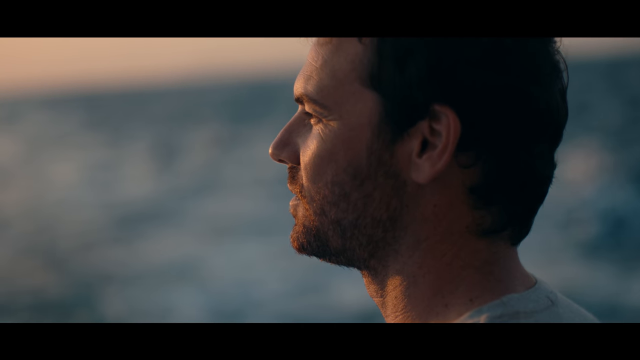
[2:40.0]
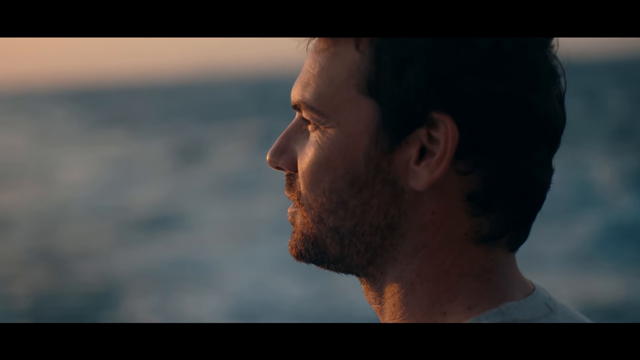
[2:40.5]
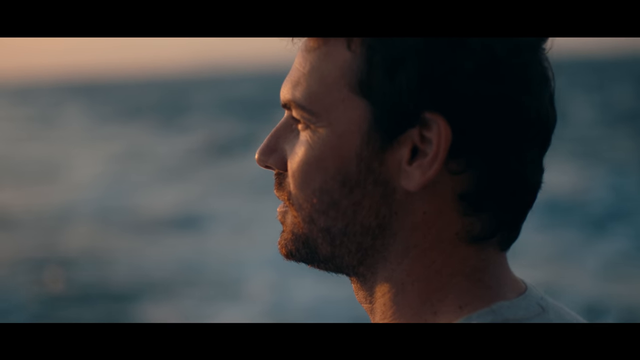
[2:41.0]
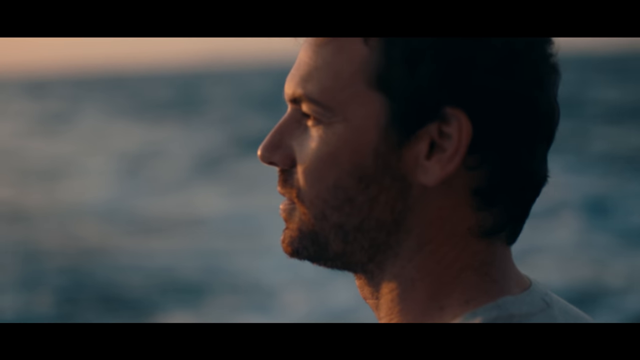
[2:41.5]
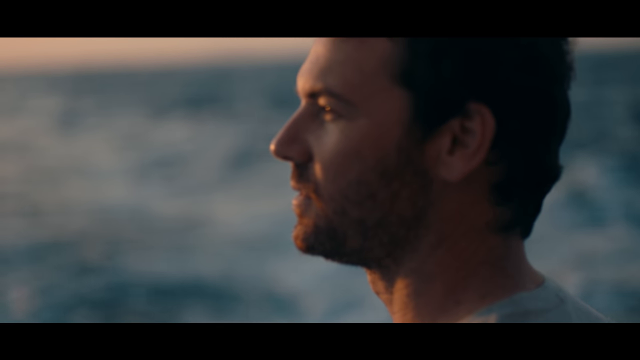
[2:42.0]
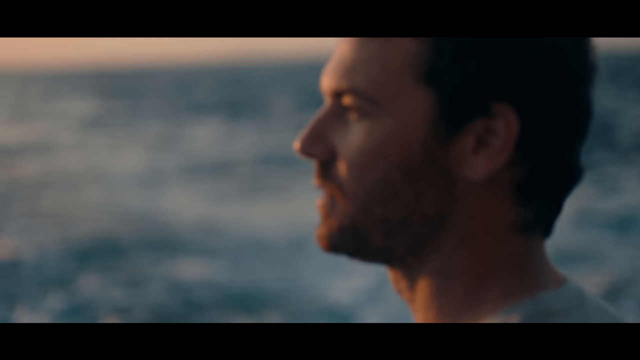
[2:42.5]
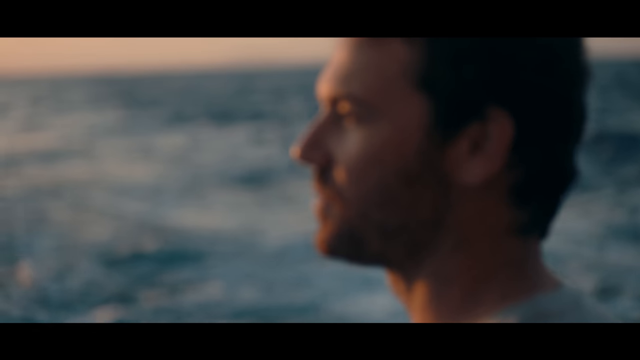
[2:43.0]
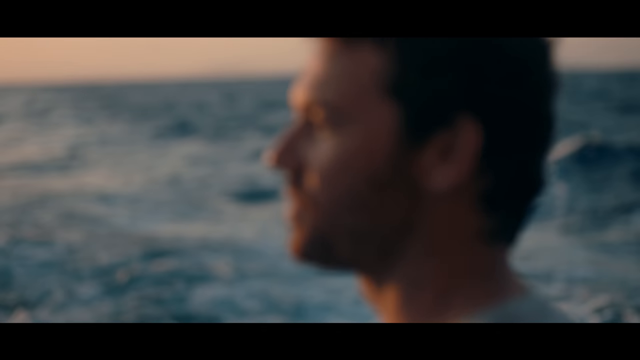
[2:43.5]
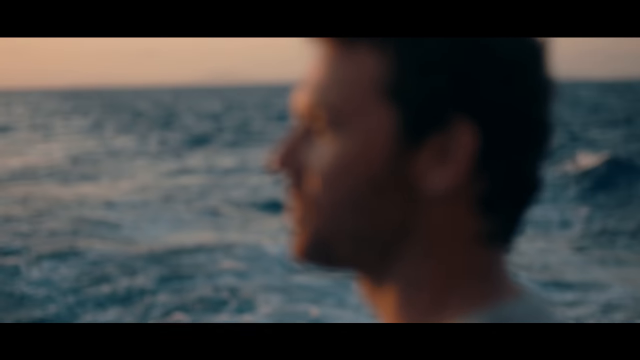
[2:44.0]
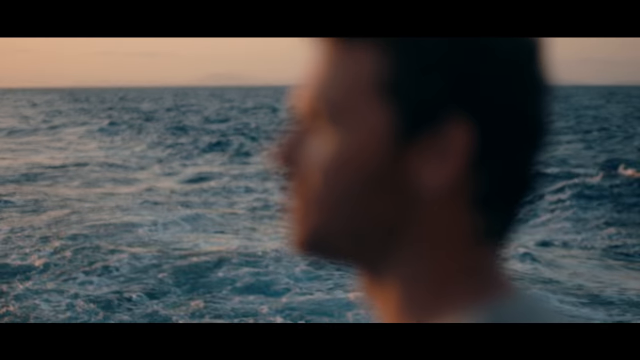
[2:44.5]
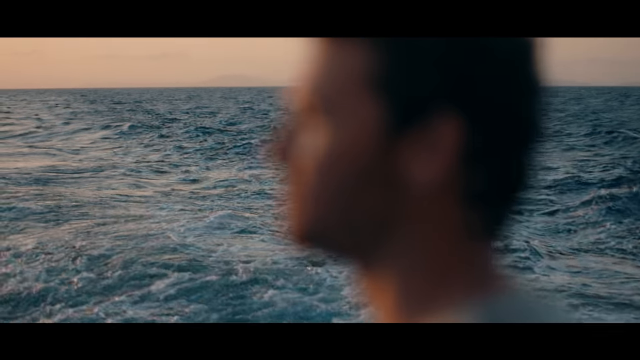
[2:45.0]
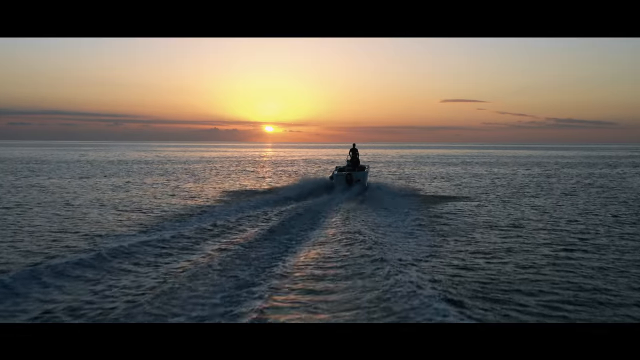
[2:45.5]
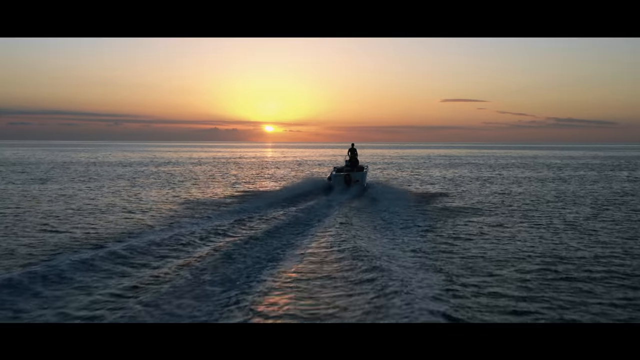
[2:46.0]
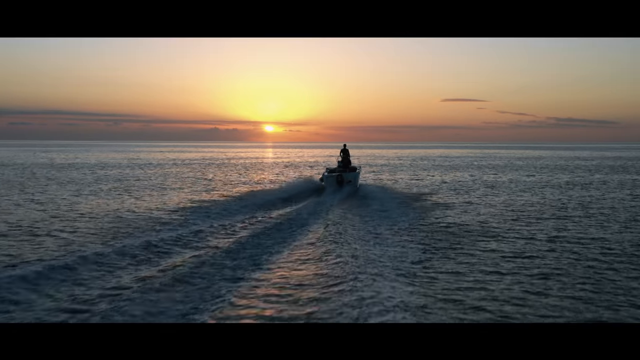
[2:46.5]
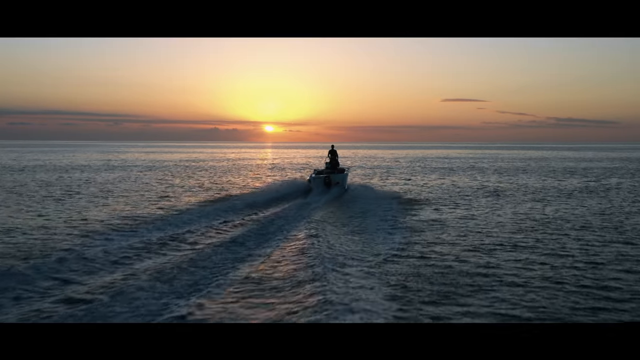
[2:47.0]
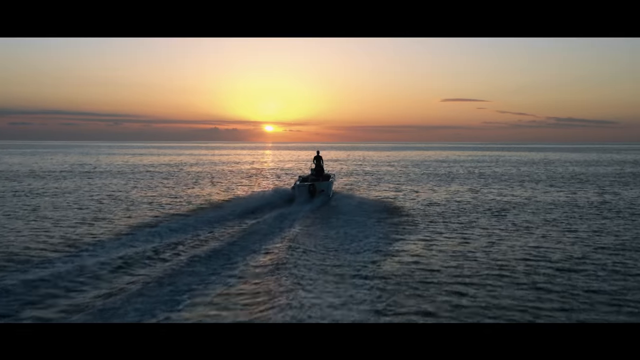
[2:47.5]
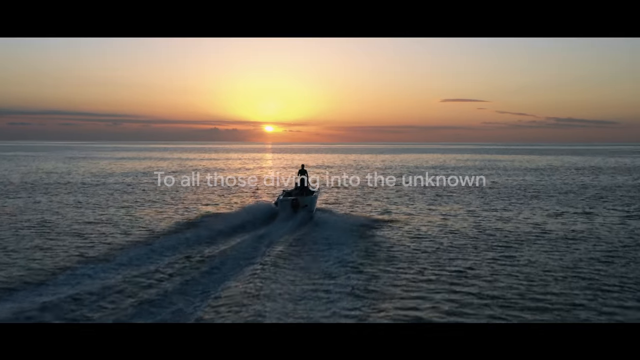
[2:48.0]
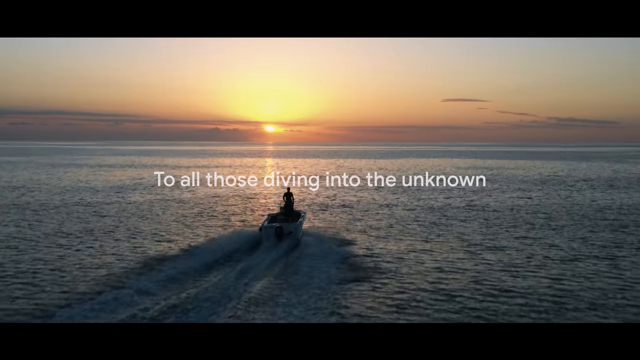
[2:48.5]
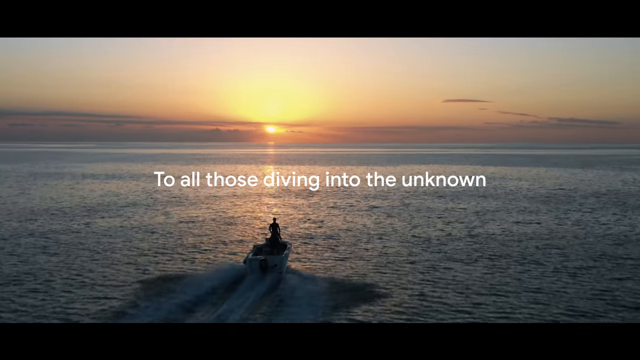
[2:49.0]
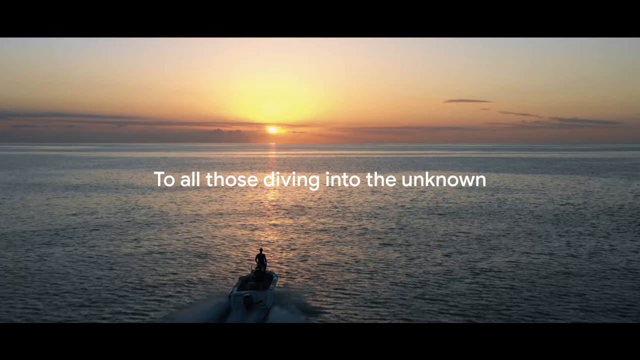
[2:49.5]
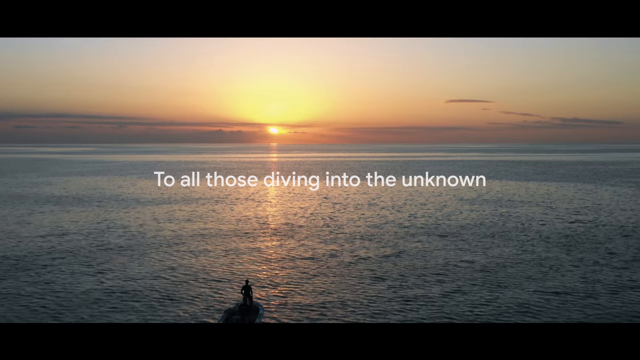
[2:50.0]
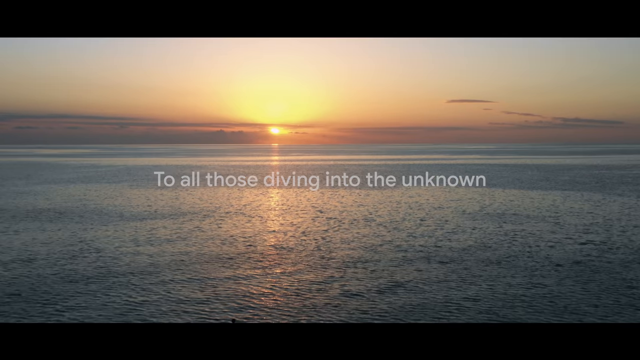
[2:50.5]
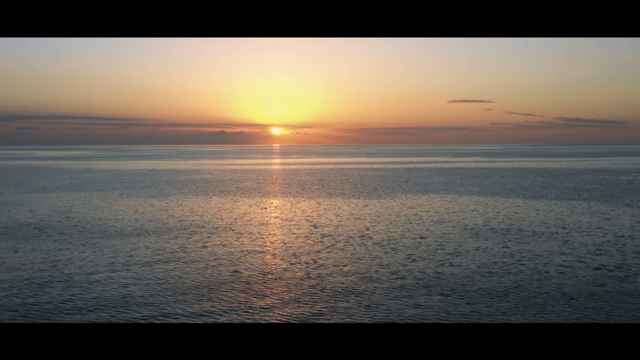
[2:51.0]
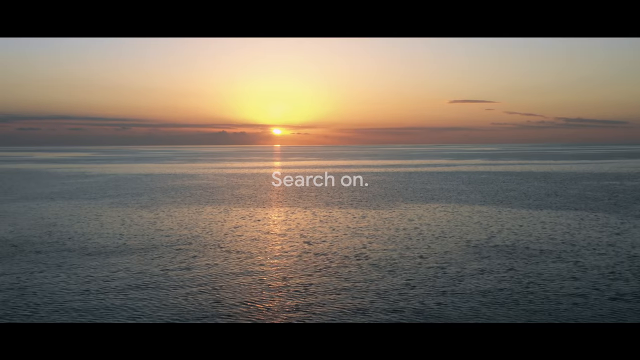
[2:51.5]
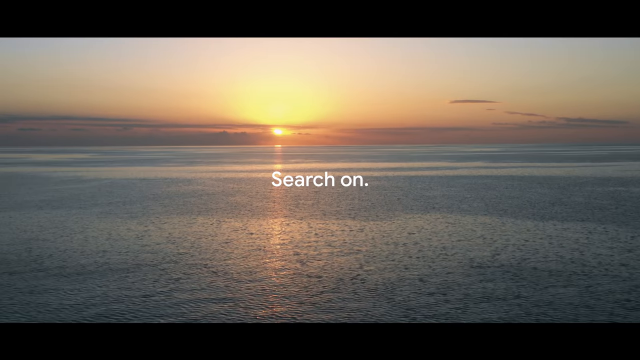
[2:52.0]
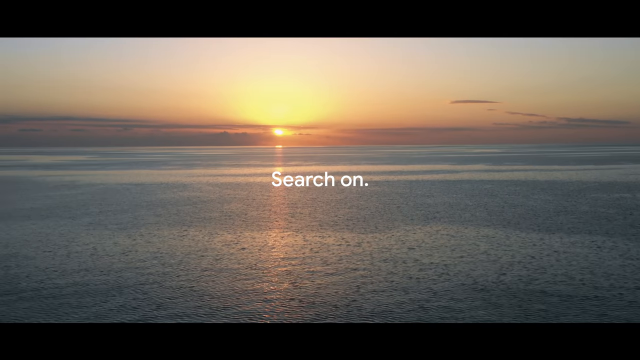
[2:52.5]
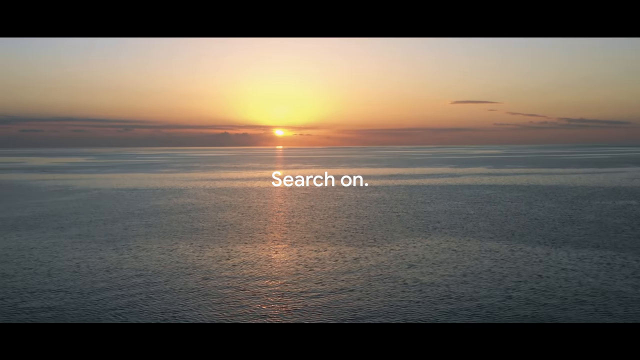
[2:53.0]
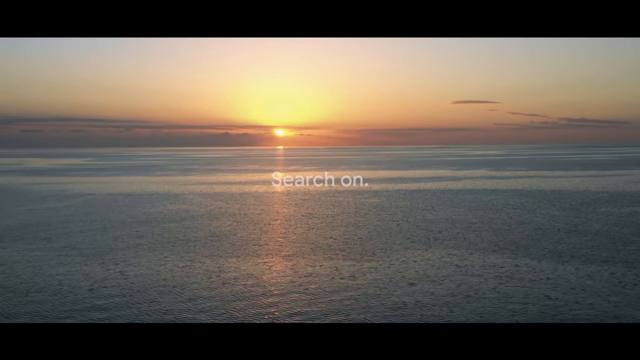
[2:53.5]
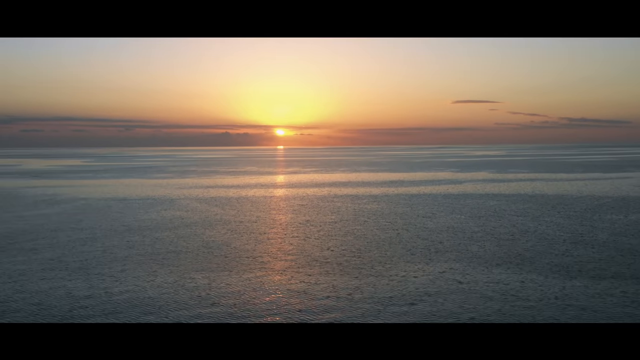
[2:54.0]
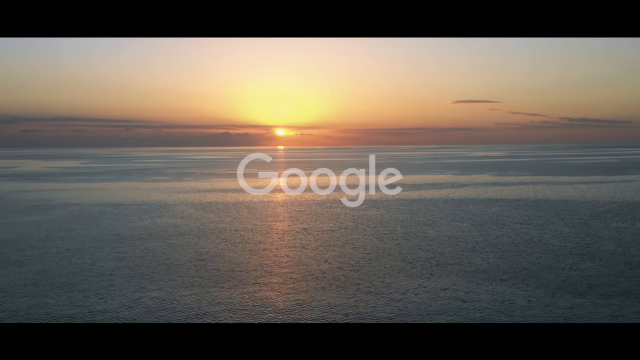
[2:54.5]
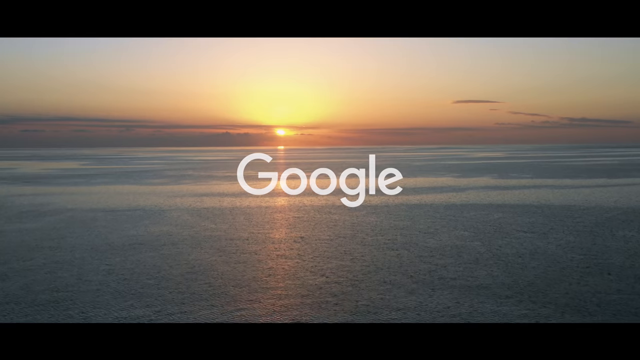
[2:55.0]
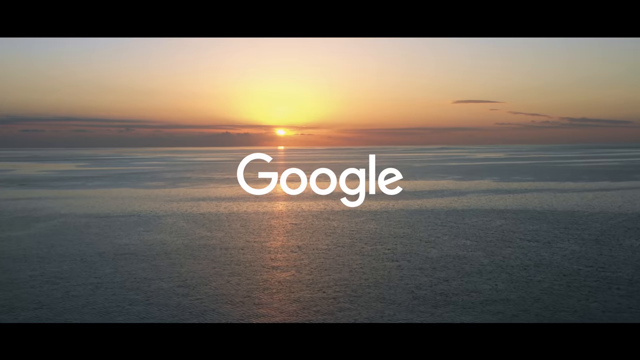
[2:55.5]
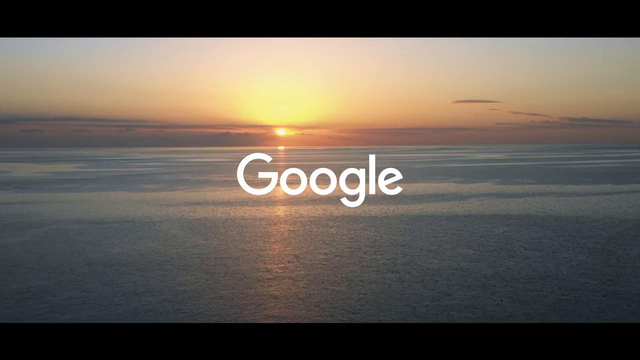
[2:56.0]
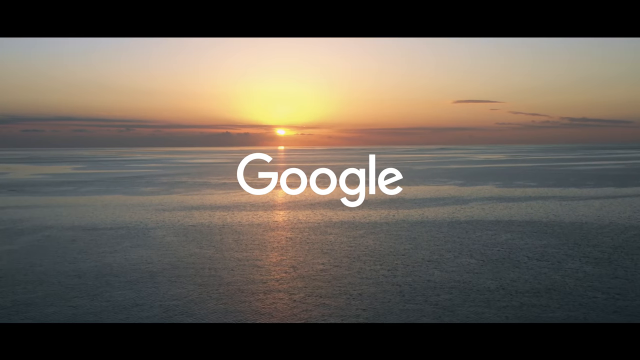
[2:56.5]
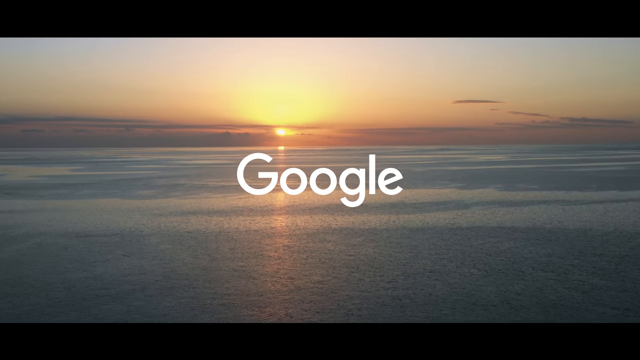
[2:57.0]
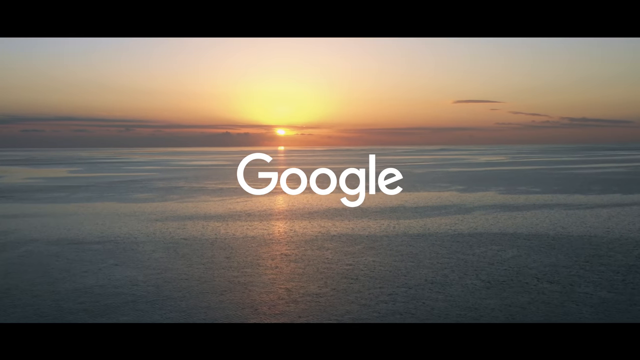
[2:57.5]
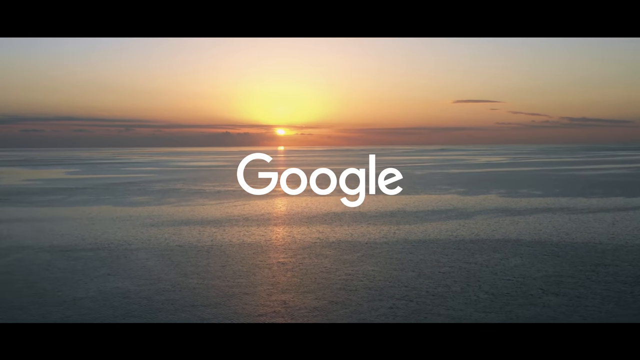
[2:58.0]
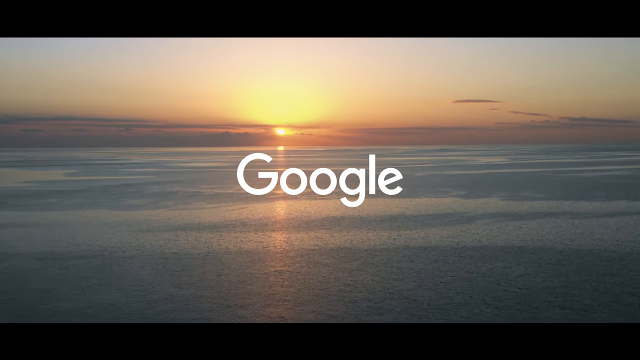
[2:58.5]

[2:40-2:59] A middle-aged Caucasian male with short brown hair and a short scruffy beard stands on a boat overlooking the ocean, which is rather choppy and deep blue. The sky is semi-cloudy, and it looks to be sunset or sunrise in the distance, with blue, orange, yellow and a bit of pink. There are some, but not many, clouds on the horizon. The ocean looks dark blue on the surface and mildly choppy, and different current patterns are visible on top of the water. The man looks over the water, seen from his left side from the shoulders up, wearing a light gray t-shirt; his left ear, jaw and the left side of his nose are visible. He is then shown as the single passenger on a little speedboat, steering away from the viewer. White text reads "To all those living in the unknown. Search on." Then the view shows just the ocean.